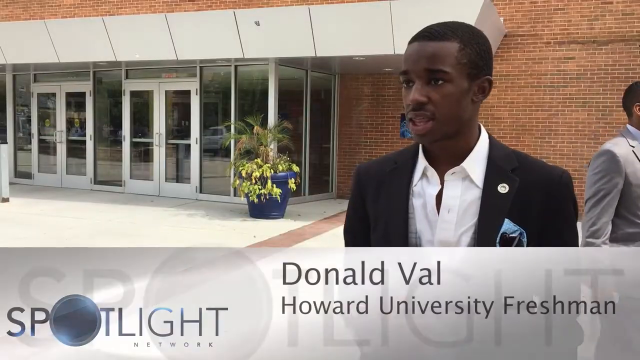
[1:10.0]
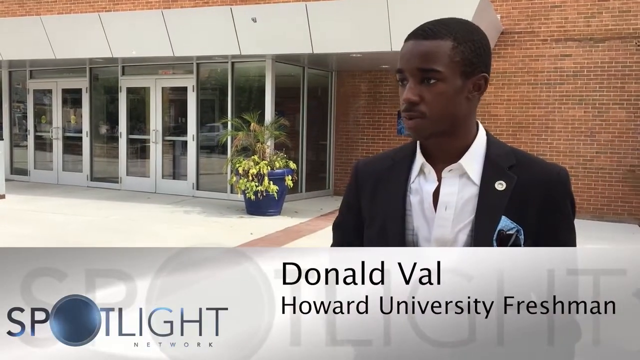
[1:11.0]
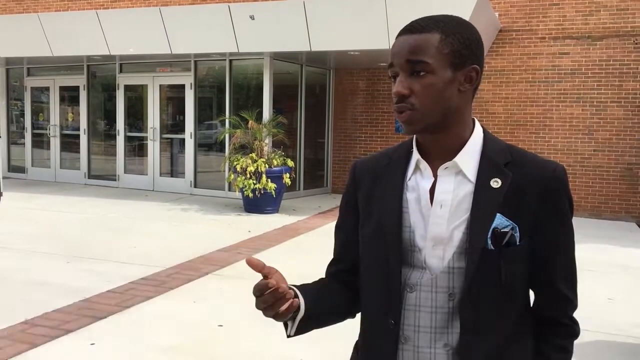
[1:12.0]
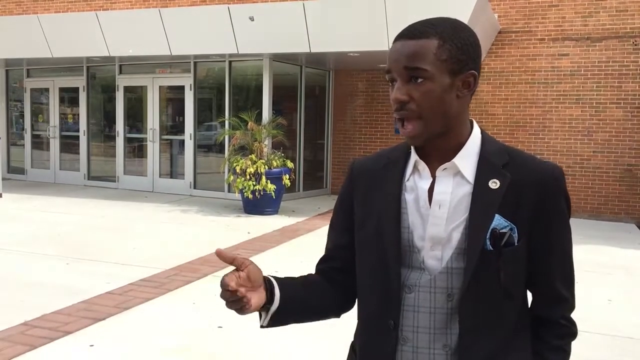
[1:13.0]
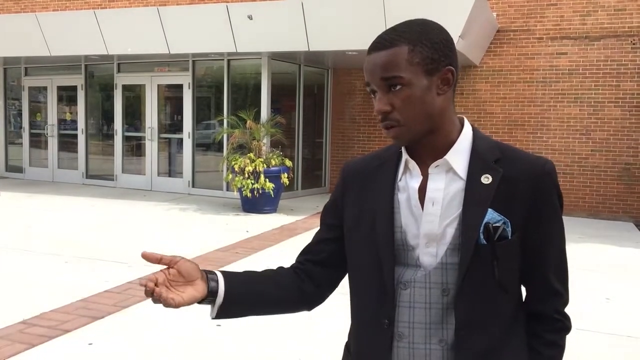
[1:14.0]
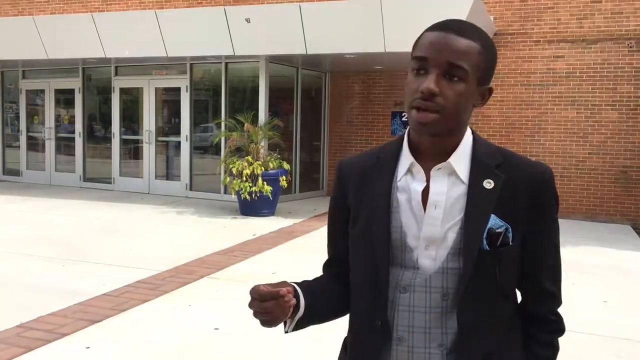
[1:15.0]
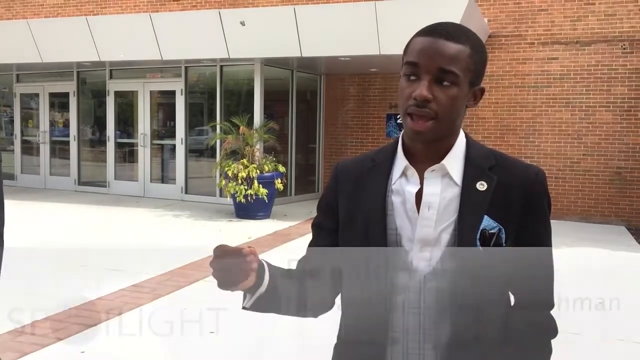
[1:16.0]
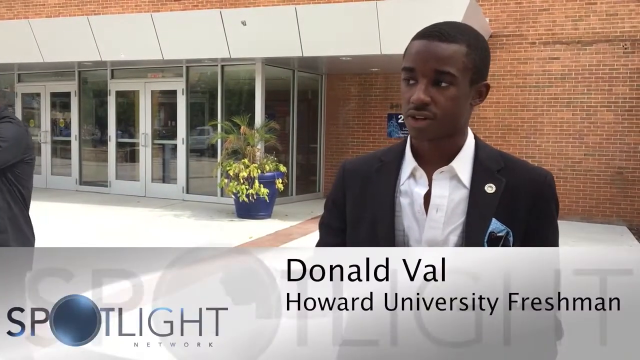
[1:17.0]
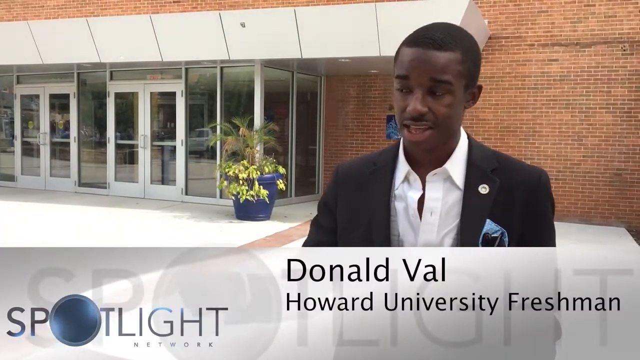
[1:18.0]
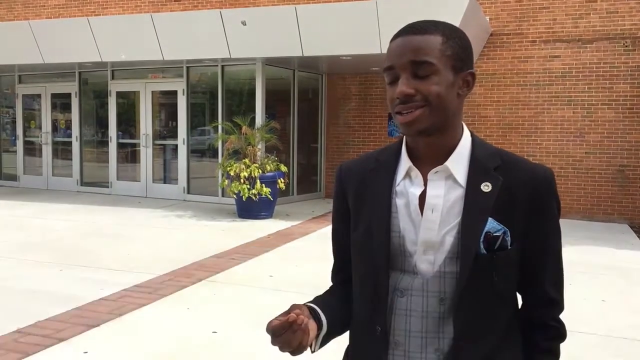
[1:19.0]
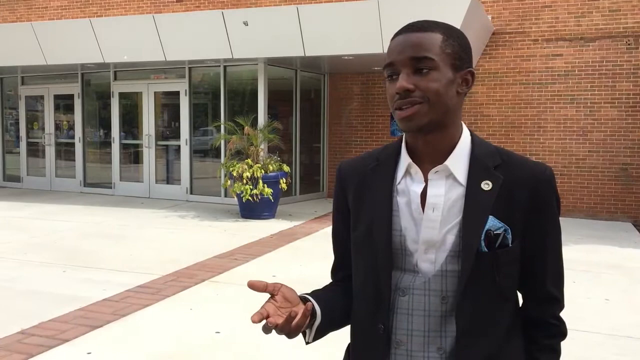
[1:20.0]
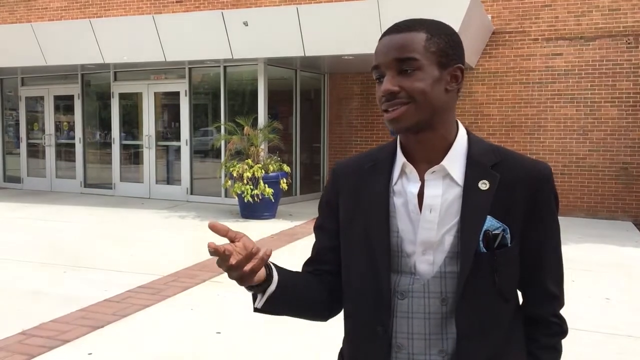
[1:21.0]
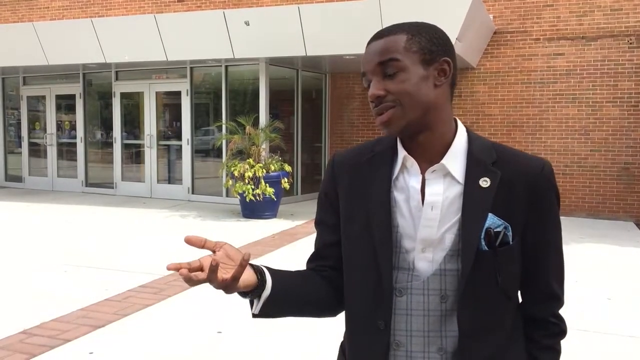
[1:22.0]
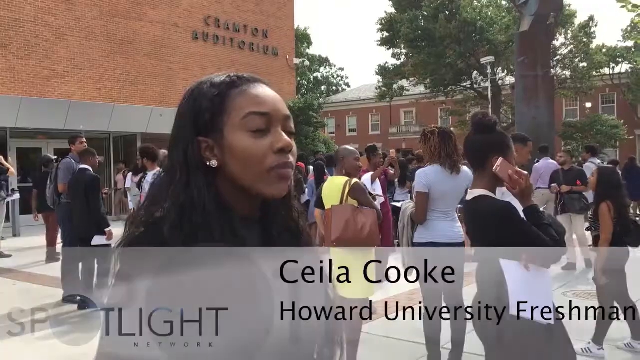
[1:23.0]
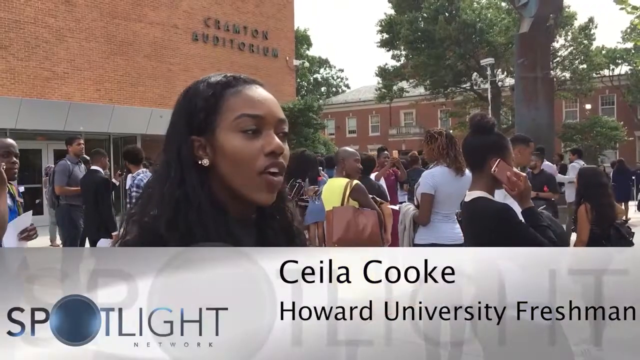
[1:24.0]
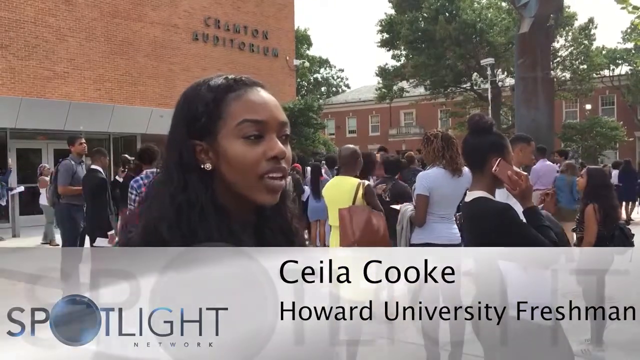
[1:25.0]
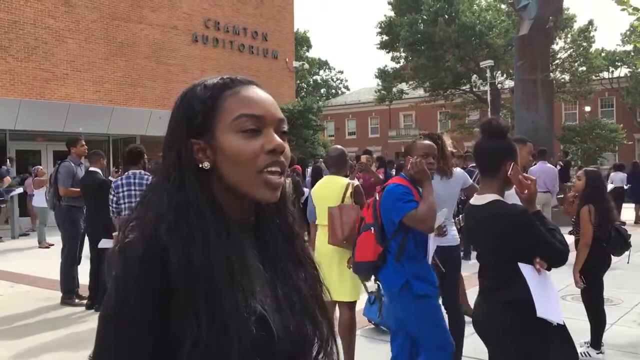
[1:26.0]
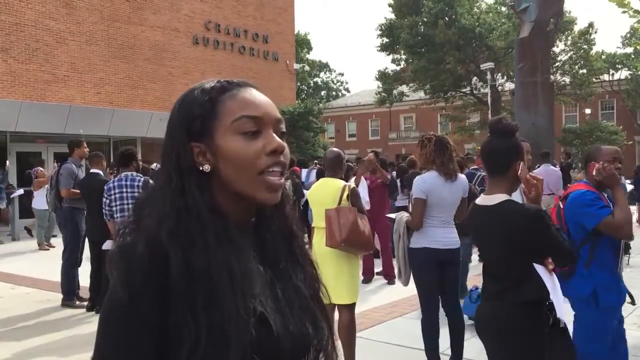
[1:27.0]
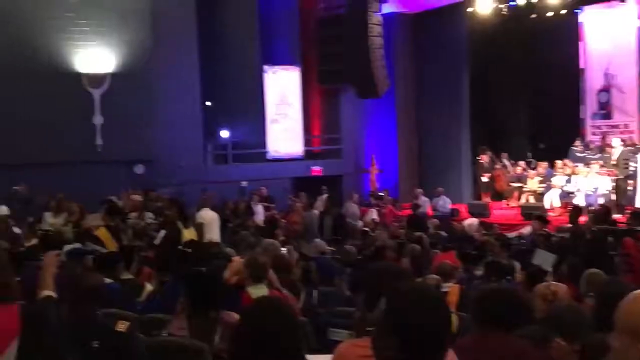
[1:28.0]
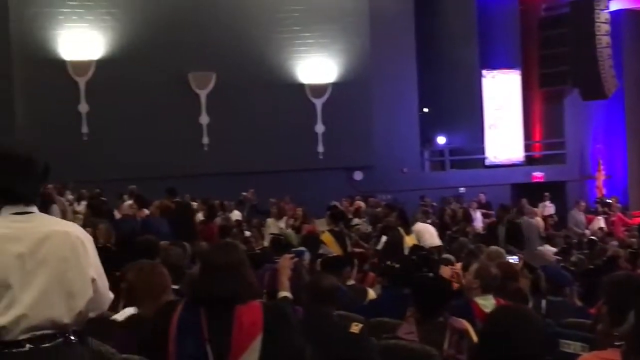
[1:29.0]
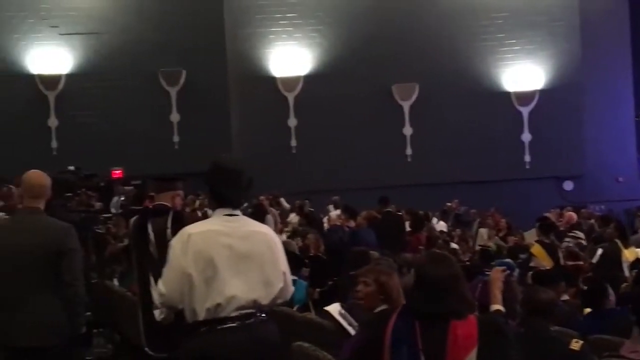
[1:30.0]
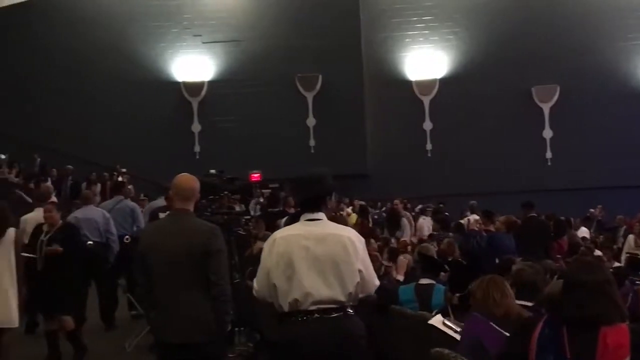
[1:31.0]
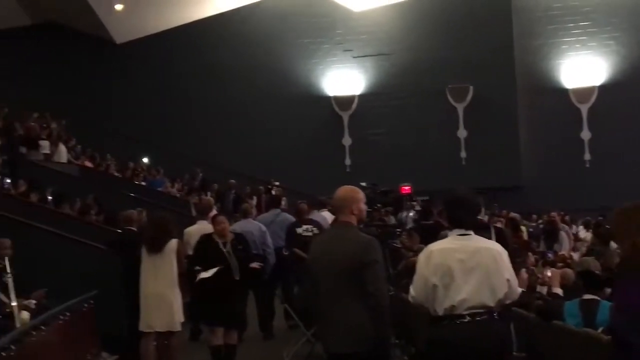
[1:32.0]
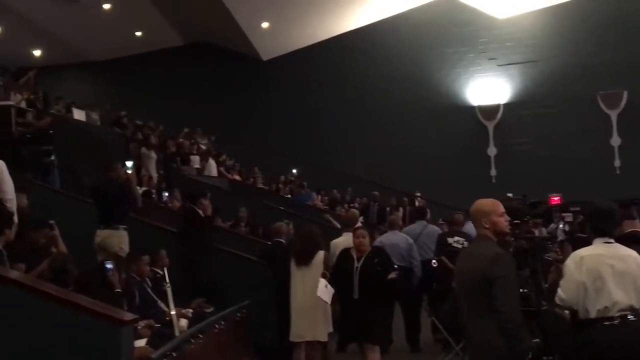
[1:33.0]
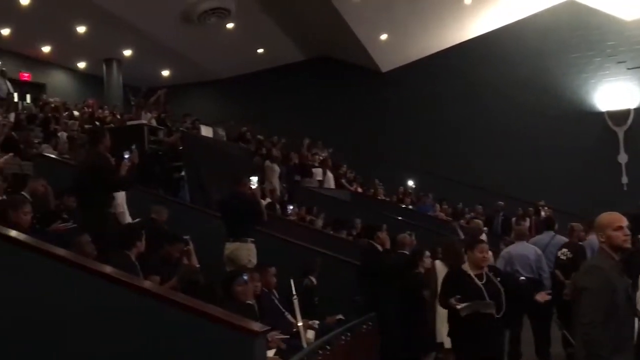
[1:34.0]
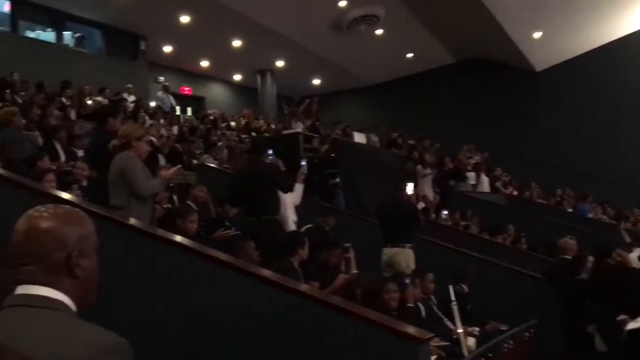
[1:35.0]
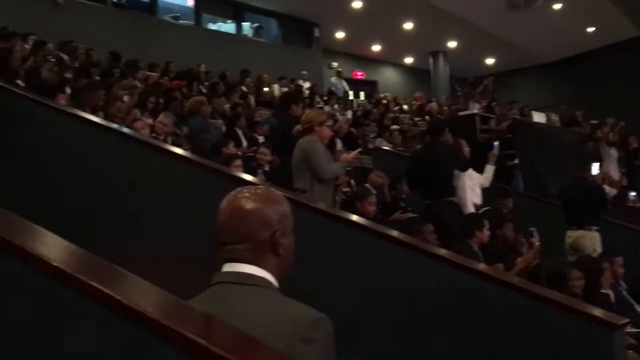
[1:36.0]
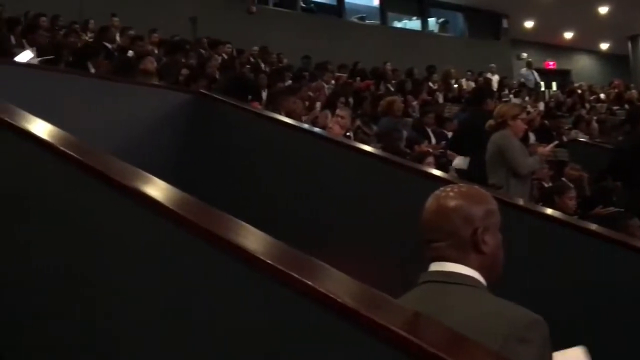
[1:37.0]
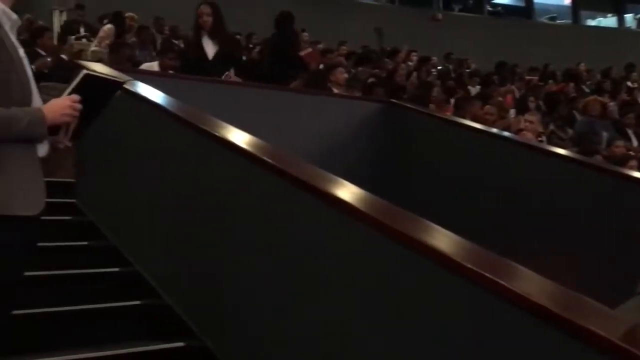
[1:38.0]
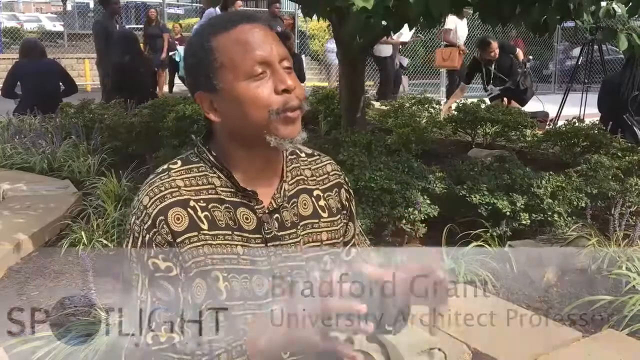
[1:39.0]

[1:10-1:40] A man wears a dark suit jacket, a white shirt and a striped vest. Next, an African-American young woman, also a student at the university, is interviewed. Scenes inside the auditorium show much more activity, with people seeming to talk a great deal, not necessarily those on the stage. A man, Donald Ballin, wears a pin and has a handkerchief and a pair of sunglasses in his pocket; he gestures with his right hand while his left hand is in his pocket. Celia Cook, also a Howard University freshman, has long dark hair. Back inside the auditorium, there seems to be more confusion and movement, with many people talking simultaneously. Donald Grant, who seems to be a Howard University professor, appears. Most of the activity takes place around the center of the university, mostly outside apart from the scenes inside. A graphic at the bottom shows that this is an episode of Spotlight Network, which may be an in-house Howard University television network. Inside the auditorium, lots of phones come out and lots of videos are being taken. Bradford Grant is then interviewed, the last interview.